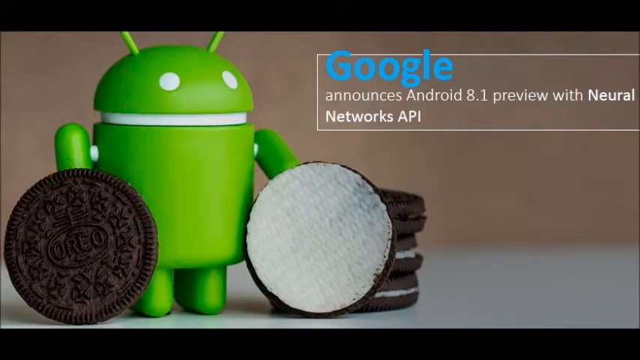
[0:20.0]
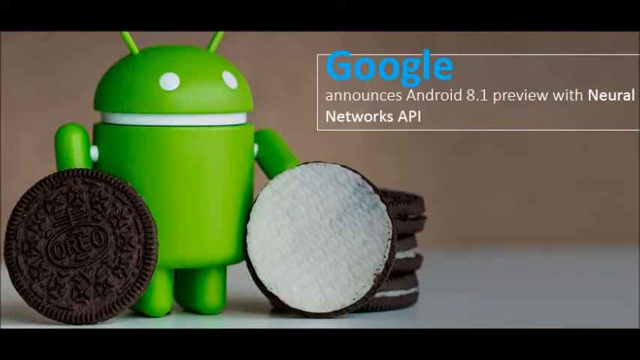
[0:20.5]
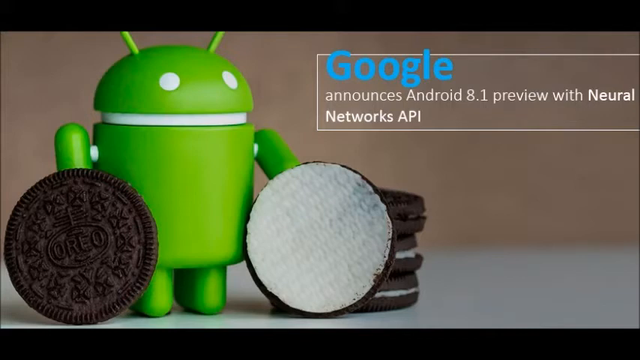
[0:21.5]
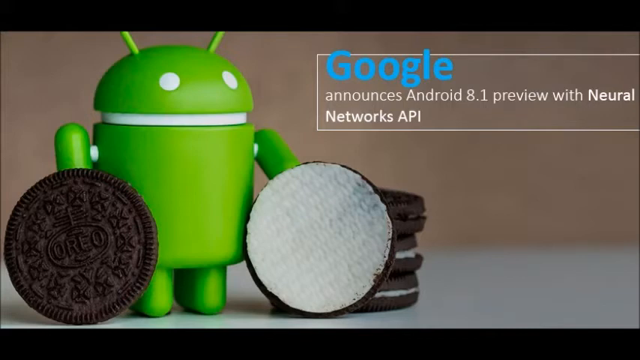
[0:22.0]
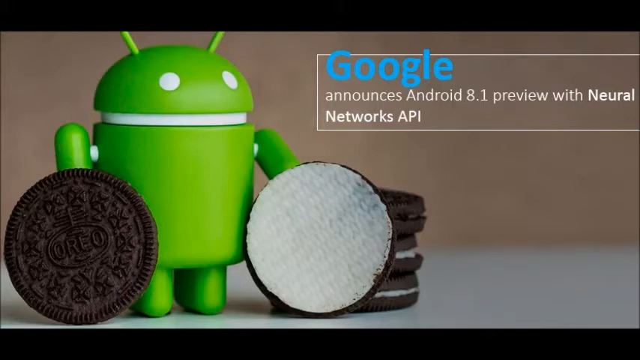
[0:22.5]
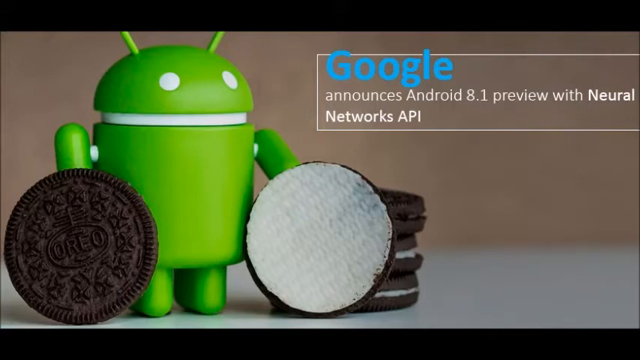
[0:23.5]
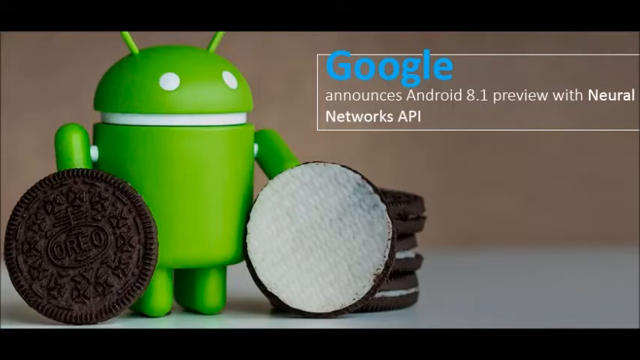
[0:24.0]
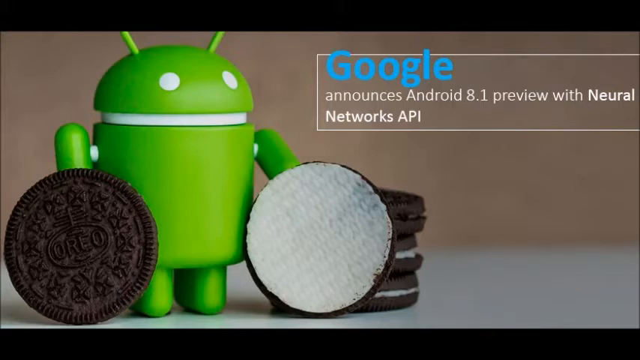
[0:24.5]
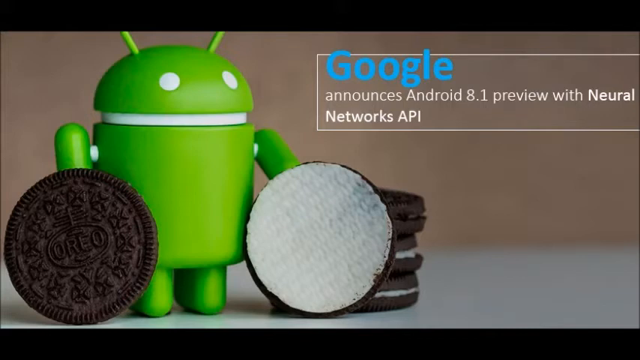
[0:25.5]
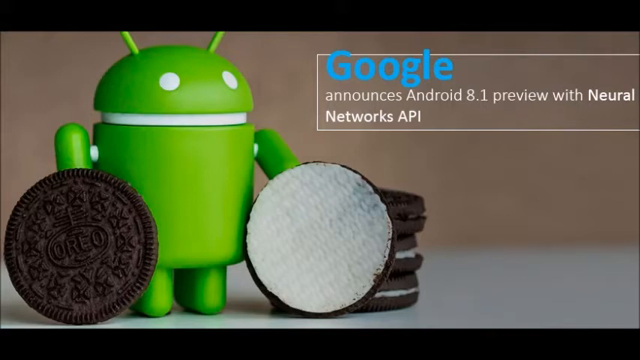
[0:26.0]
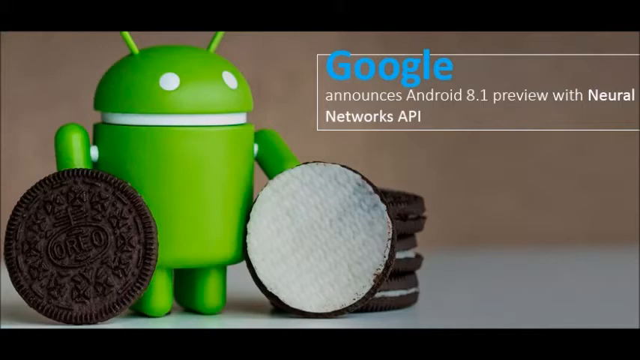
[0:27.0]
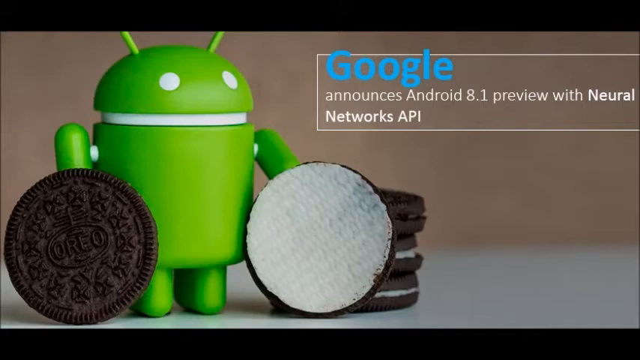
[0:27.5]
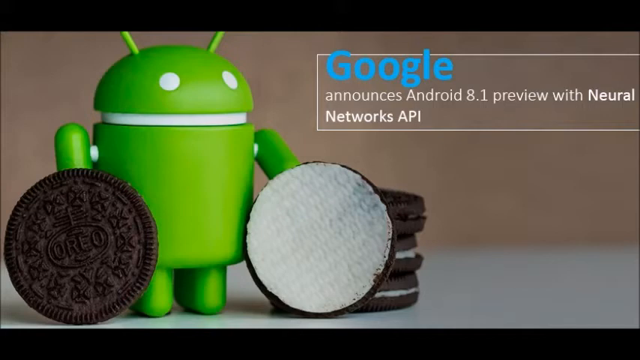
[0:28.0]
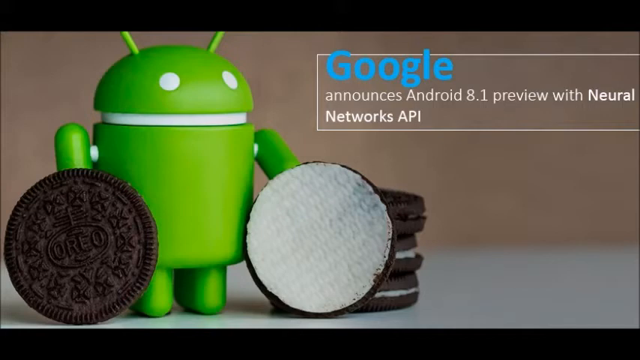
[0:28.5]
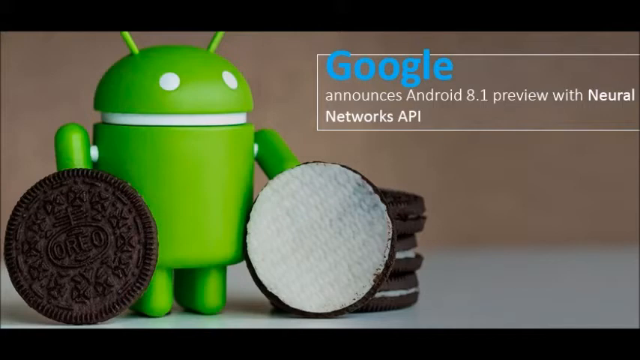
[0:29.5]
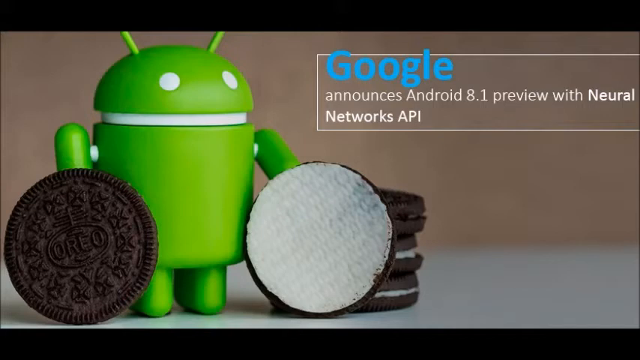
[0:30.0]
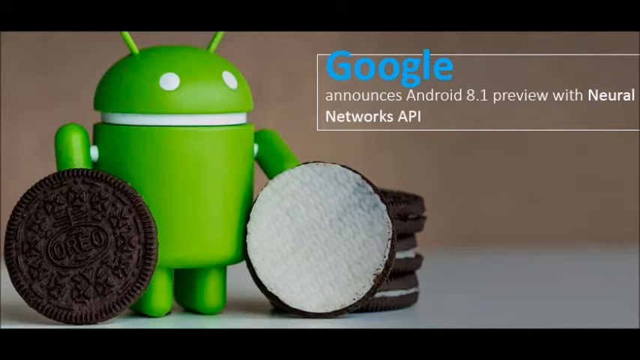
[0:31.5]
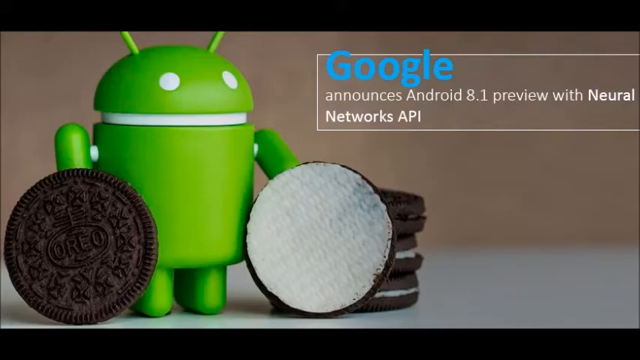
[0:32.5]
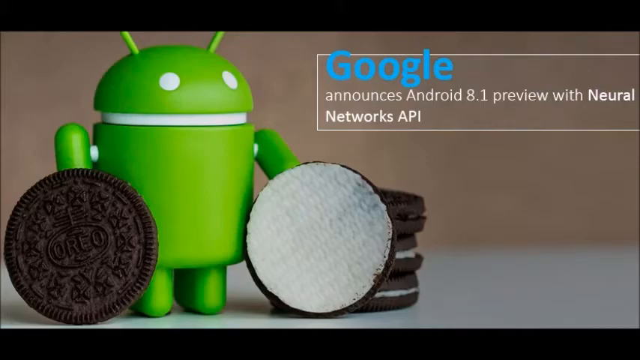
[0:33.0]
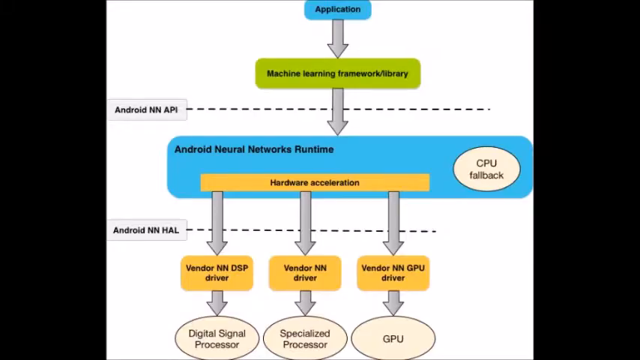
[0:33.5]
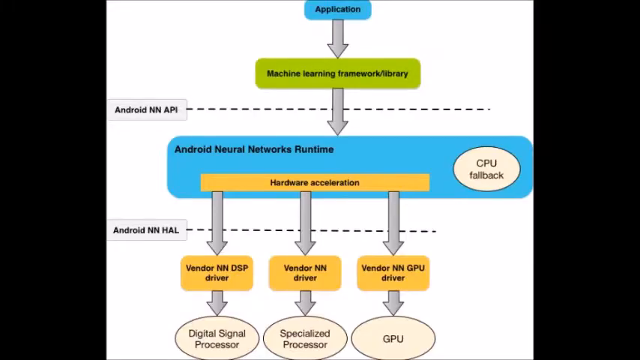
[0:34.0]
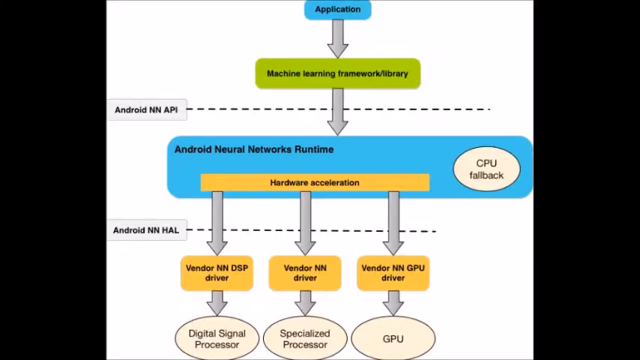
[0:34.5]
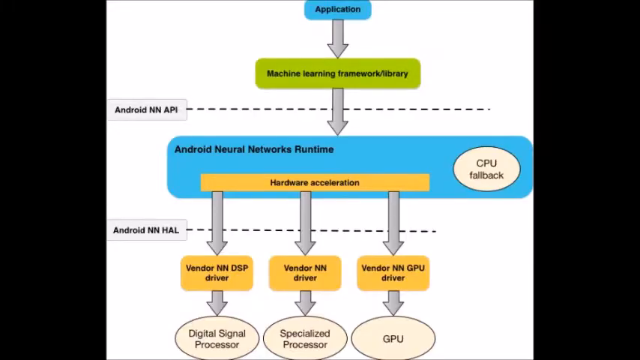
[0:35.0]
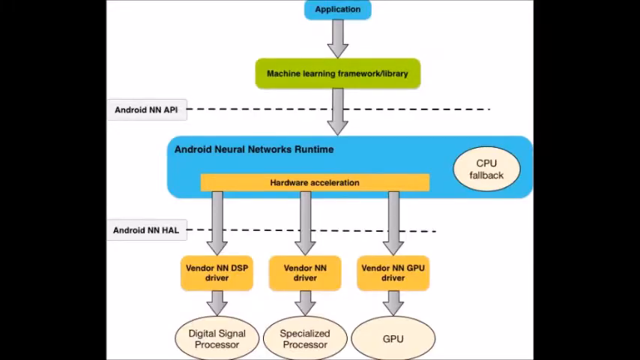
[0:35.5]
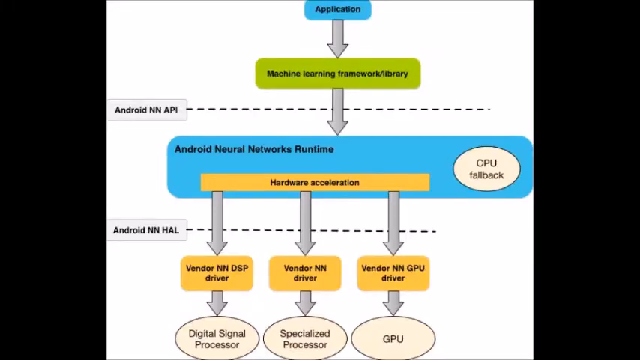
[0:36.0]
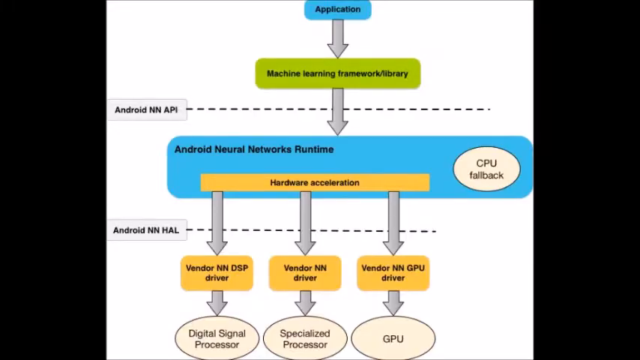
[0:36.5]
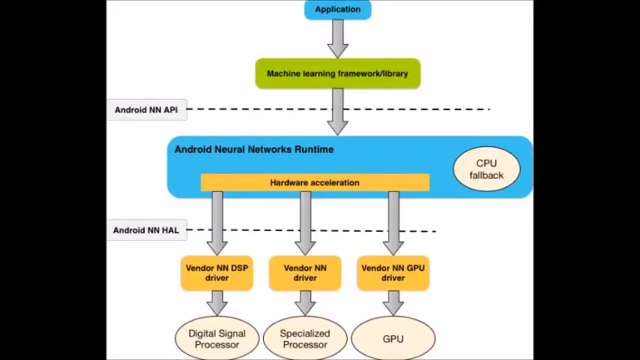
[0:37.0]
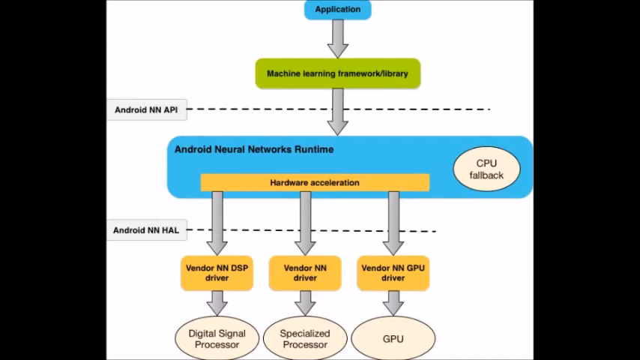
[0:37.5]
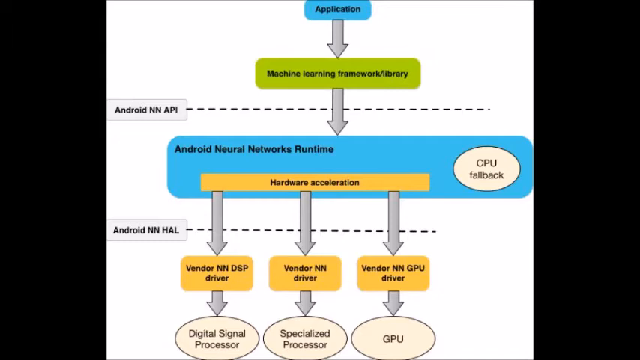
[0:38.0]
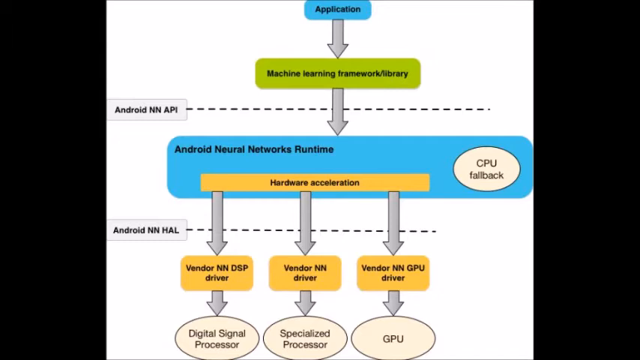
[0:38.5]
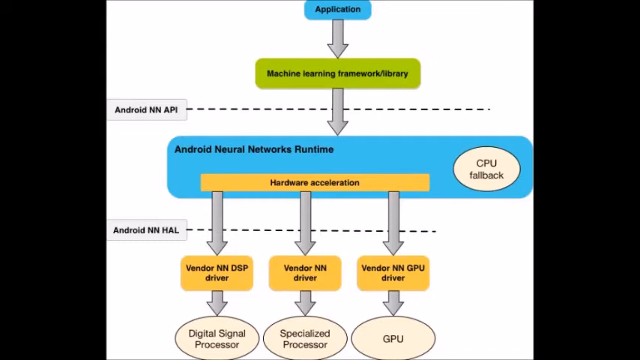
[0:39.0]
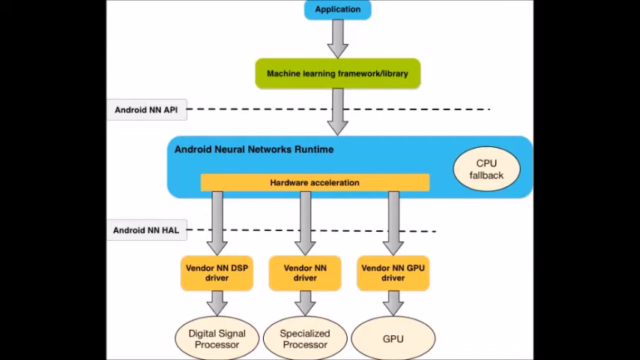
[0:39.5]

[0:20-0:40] The same android is on the left, with the top of the Oreo on the left and the bottom of the Oreo on the right, still holding both with its hands. A stack of Oreos is to the left of it, right behind the bottom of the Oreo it is holding. Then a sort of coding-type tree diagram appears. At the very top it says "application", and an arrow goes down to "machine learning framework library". Another arrow goes down, crossed by a sort of horizontal dashed line labeled "android nn api", and continues down to a blue section labeled "android neural network runtime".